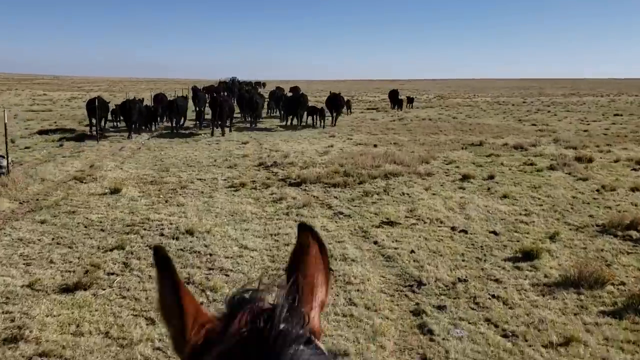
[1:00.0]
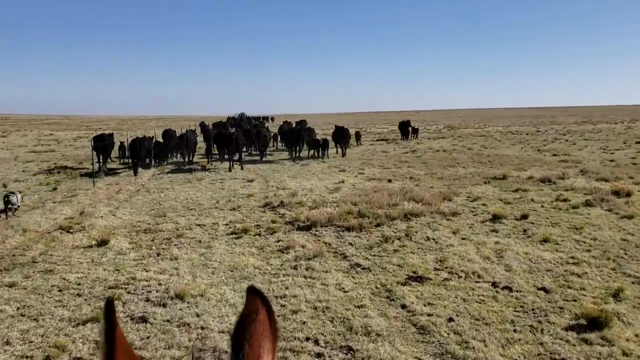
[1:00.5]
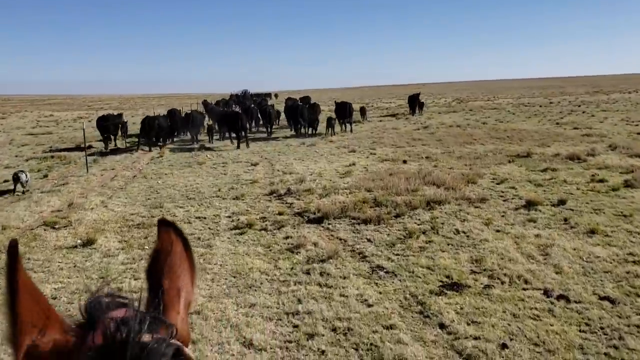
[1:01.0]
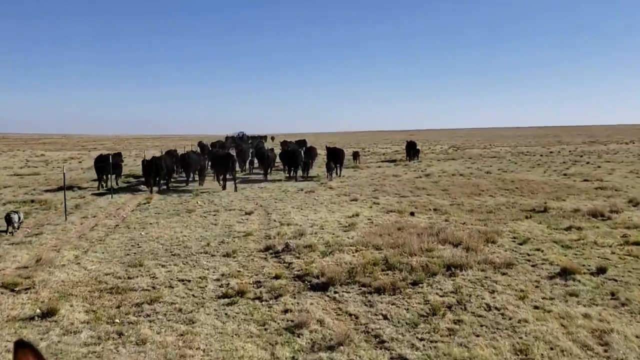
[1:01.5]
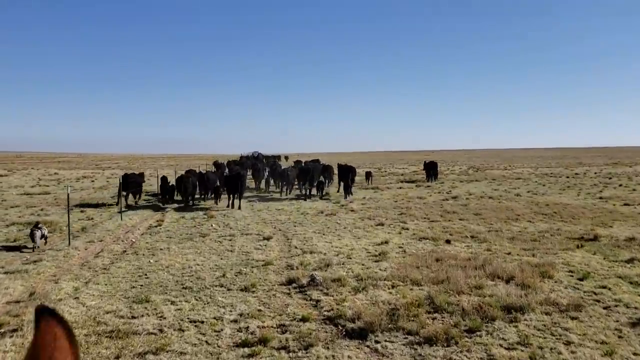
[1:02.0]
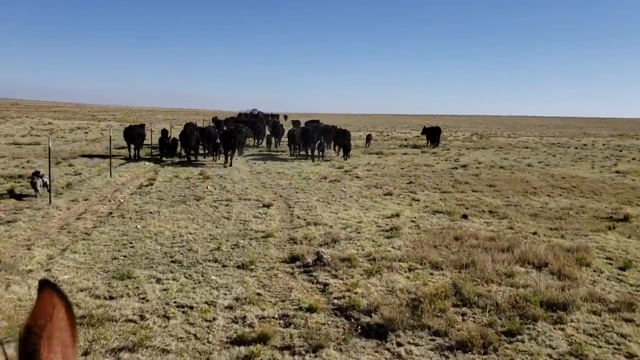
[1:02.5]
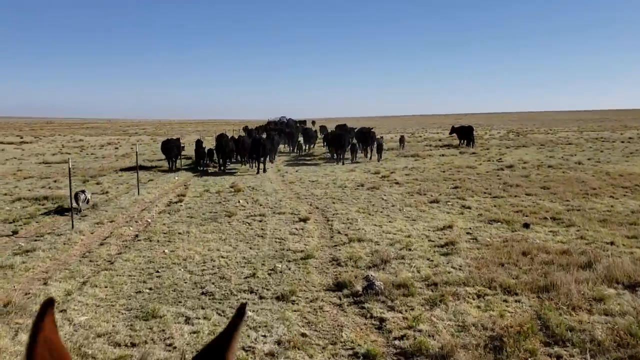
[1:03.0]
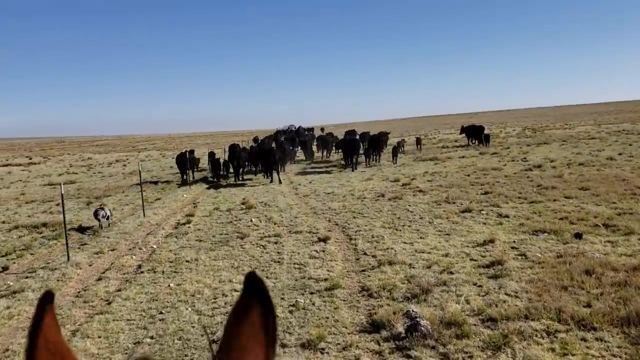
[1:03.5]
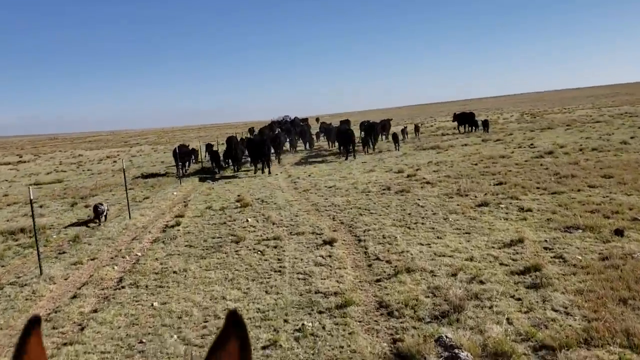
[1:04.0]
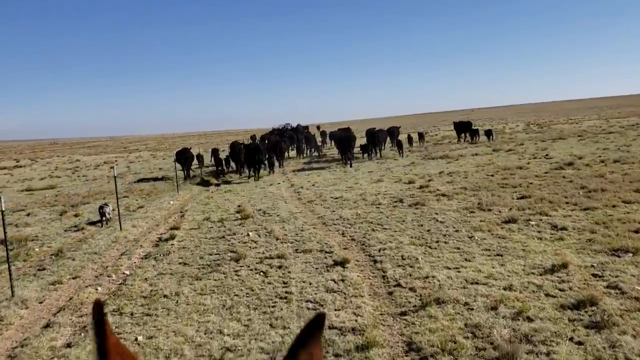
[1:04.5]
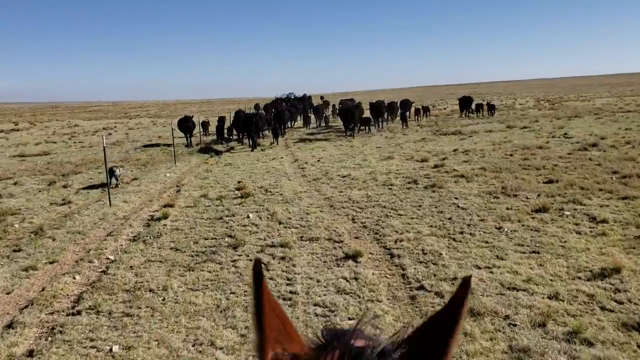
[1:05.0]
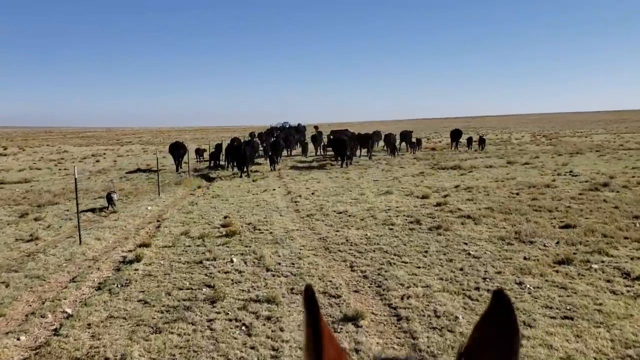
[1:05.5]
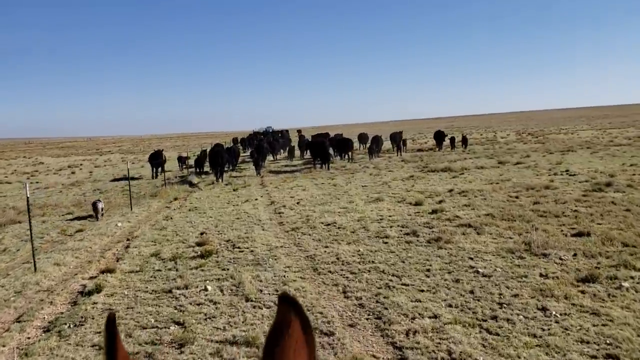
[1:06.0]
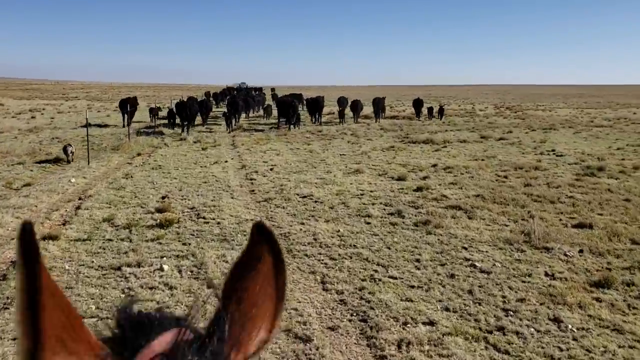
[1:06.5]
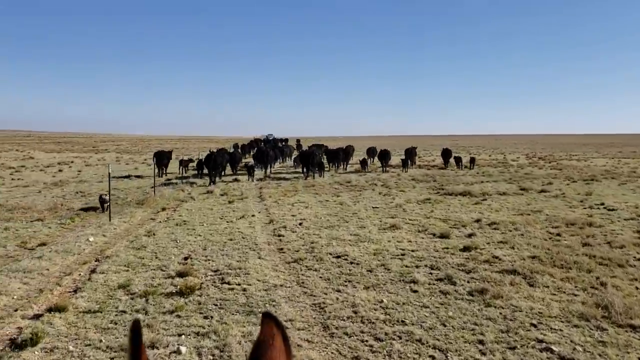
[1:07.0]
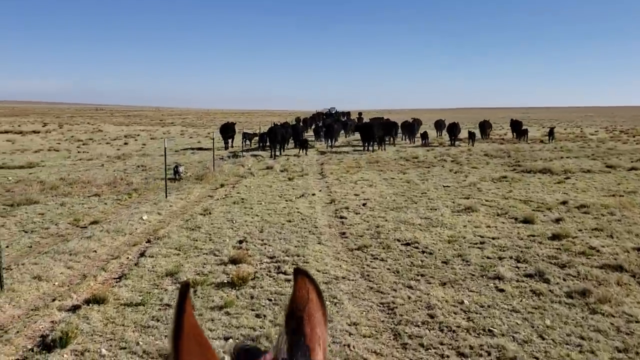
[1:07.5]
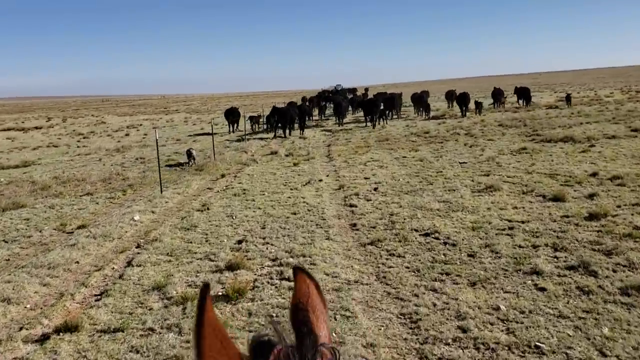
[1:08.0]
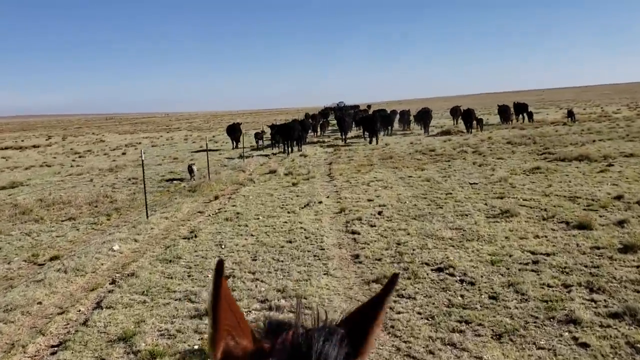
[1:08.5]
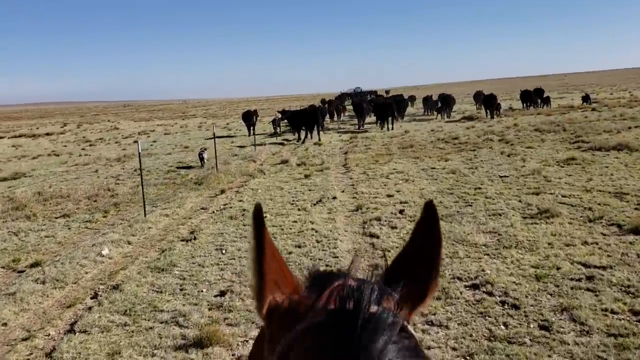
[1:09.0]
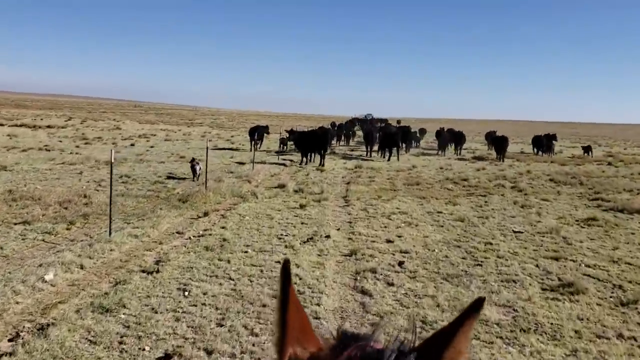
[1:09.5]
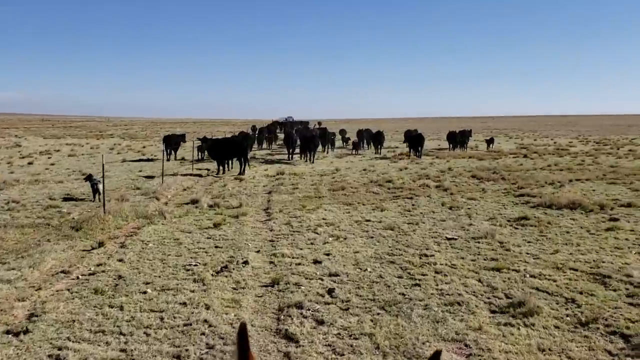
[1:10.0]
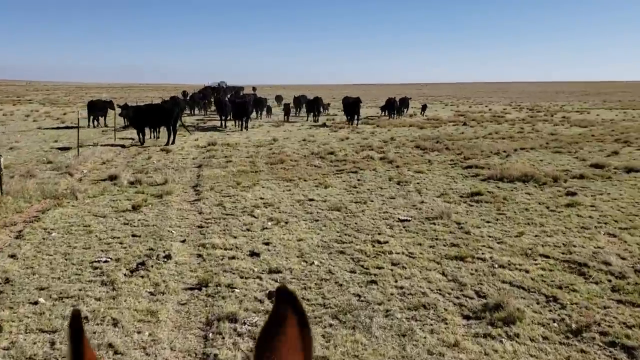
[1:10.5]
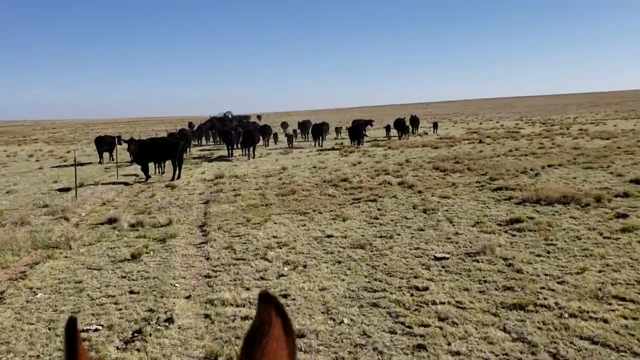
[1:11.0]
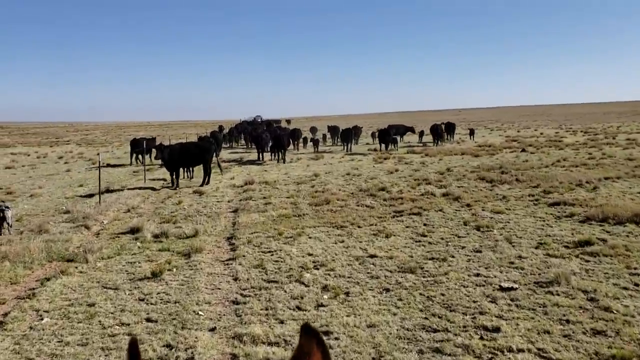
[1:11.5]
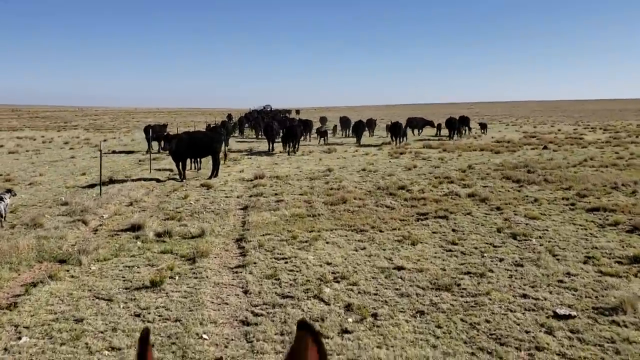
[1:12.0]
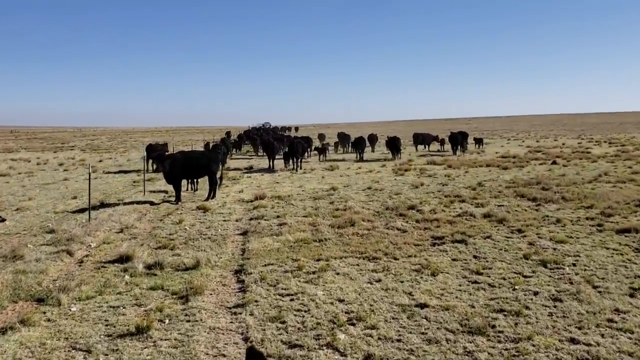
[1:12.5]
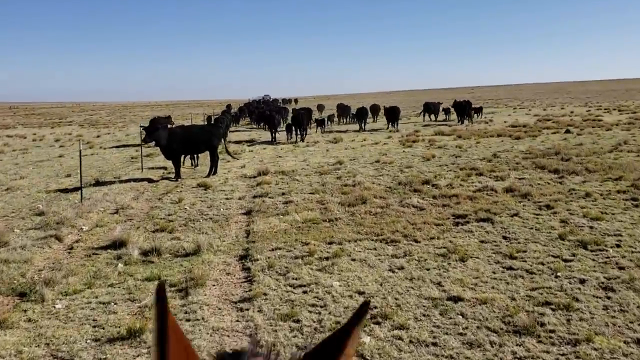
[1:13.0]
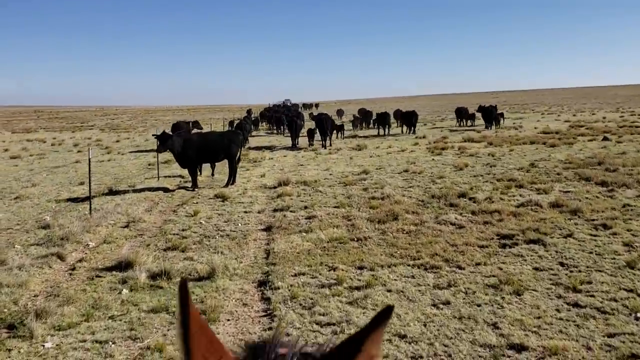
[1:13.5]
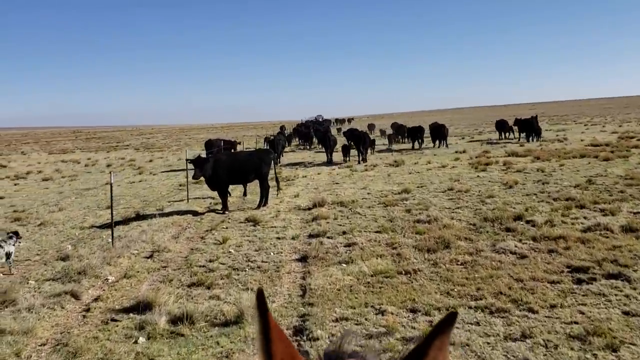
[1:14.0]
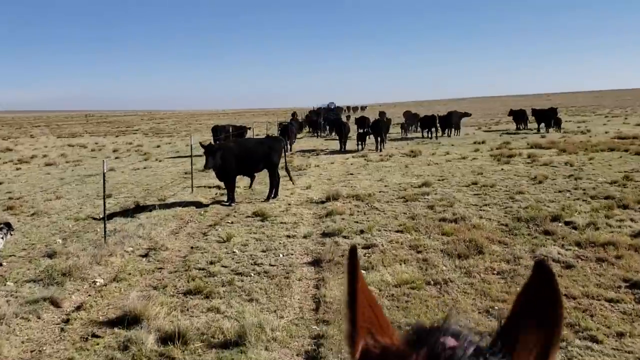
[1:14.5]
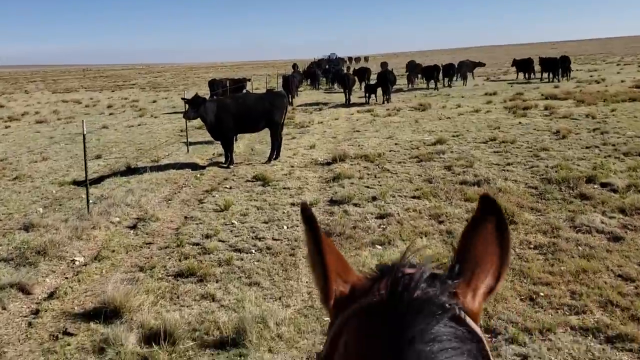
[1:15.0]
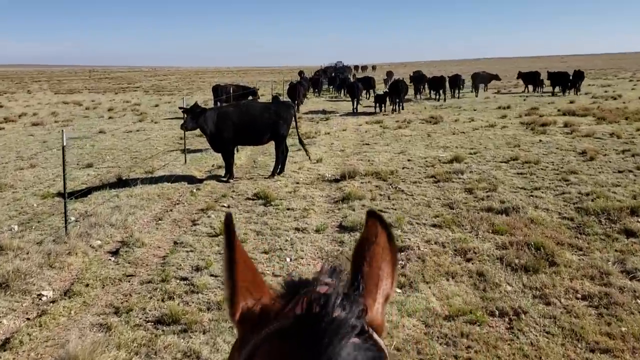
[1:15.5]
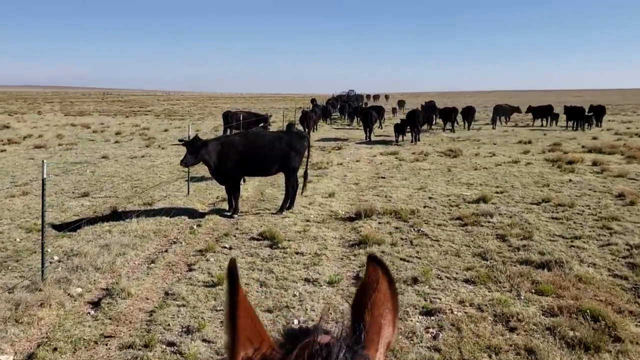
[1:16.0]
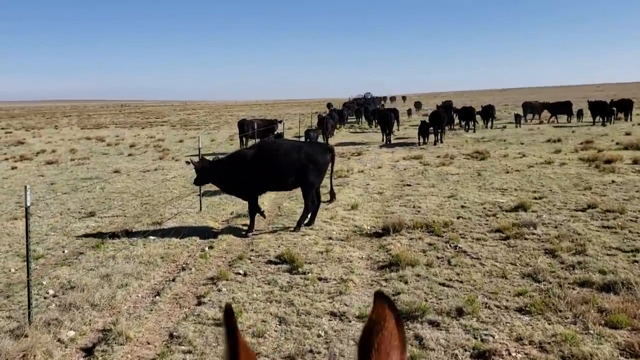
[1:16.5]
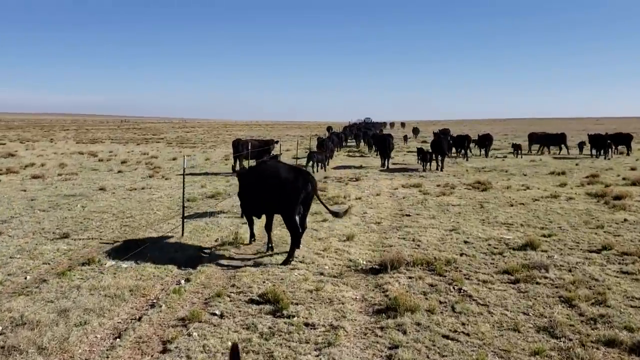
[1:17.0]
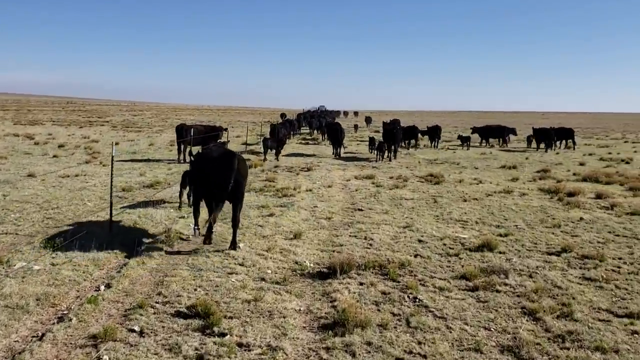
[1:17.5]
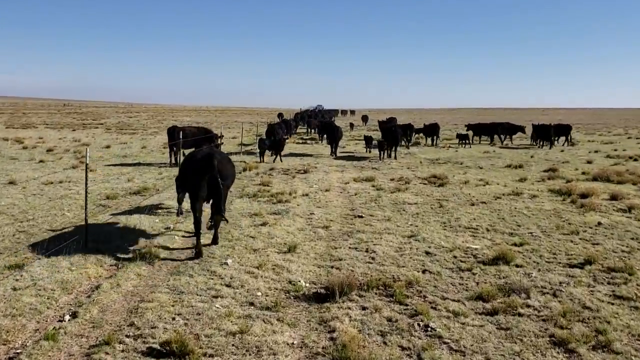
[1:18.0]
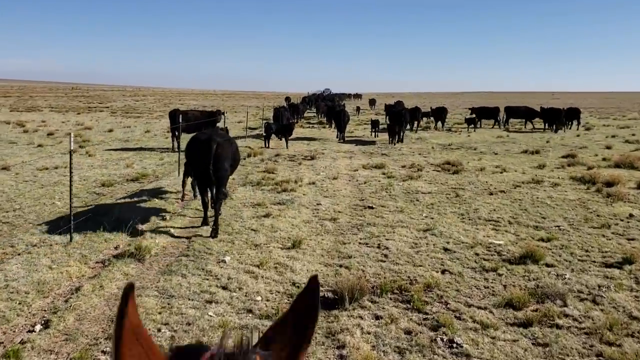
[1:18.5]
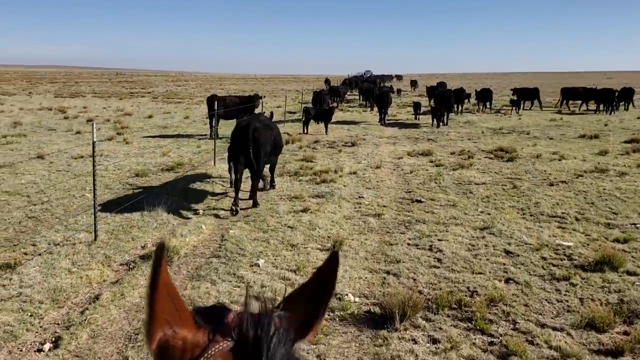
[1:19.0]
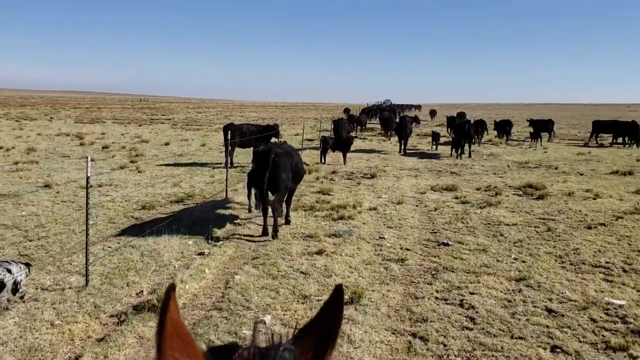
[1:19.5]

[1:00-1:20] The dog appears to be making the cattle run and keeping the herd in a tight formation. Ahead of the dog, two cattle that strayed from the group are trying to rejoin it, but the fence blocks them. The cattle are running far ahead, and the dog is running too. Then the dog stops, and the cattle stop as well. One cow stays behind, looks curiously at the dog, and then moves forward again. Some cattle are far ahead, and the herd appears to have broken into two: one group in the mid-ground and another in the background, closer to the horizon.